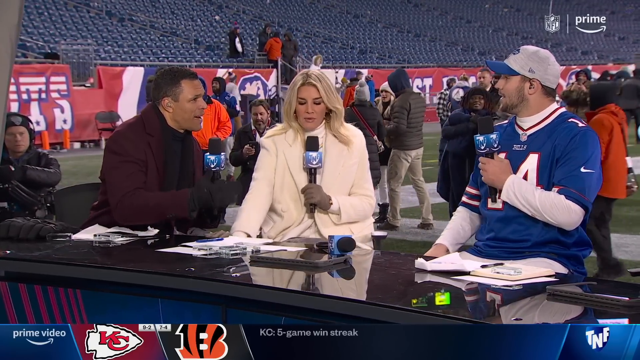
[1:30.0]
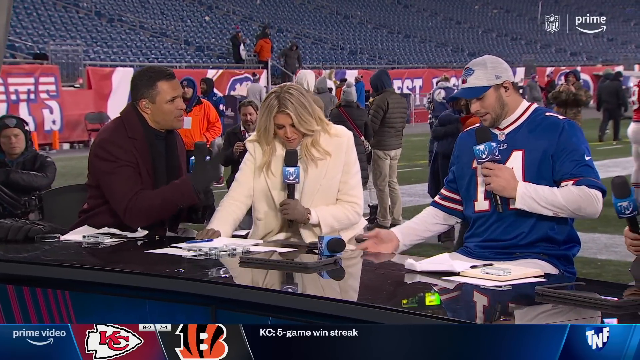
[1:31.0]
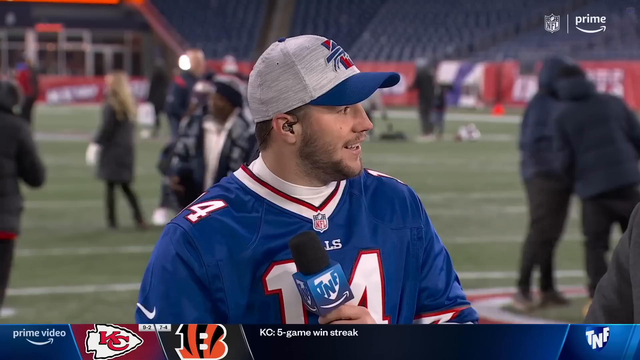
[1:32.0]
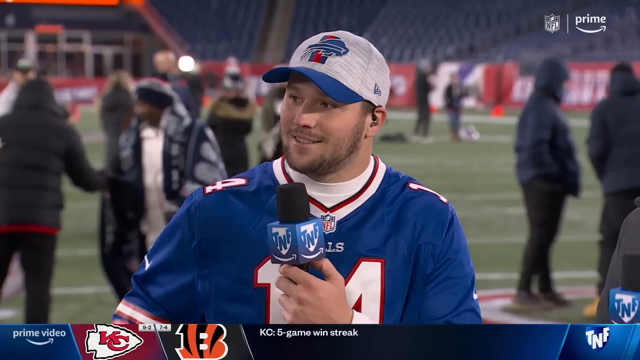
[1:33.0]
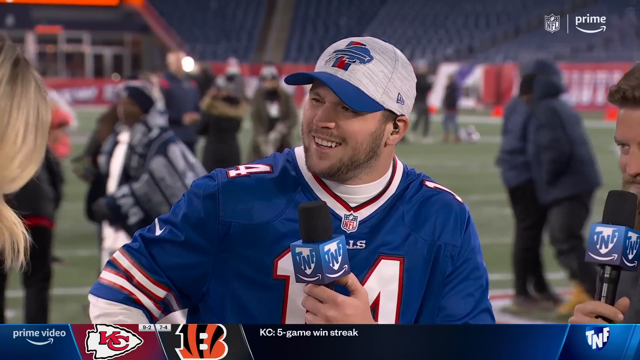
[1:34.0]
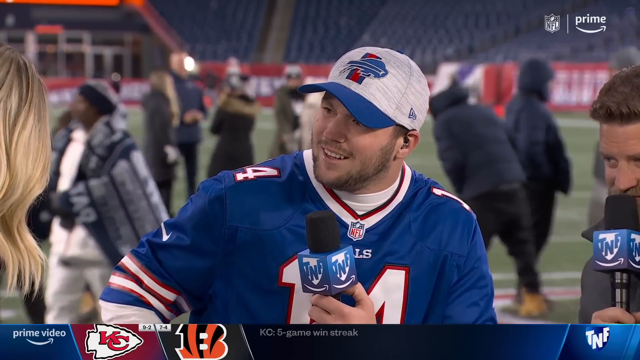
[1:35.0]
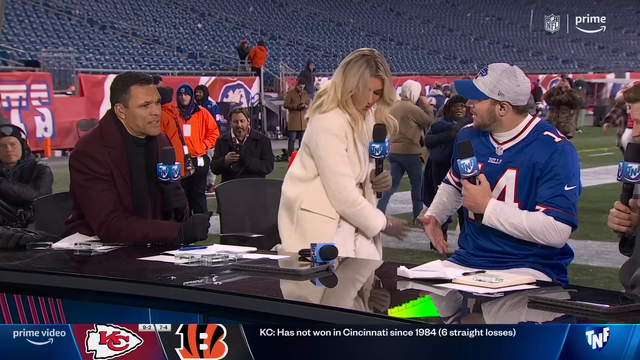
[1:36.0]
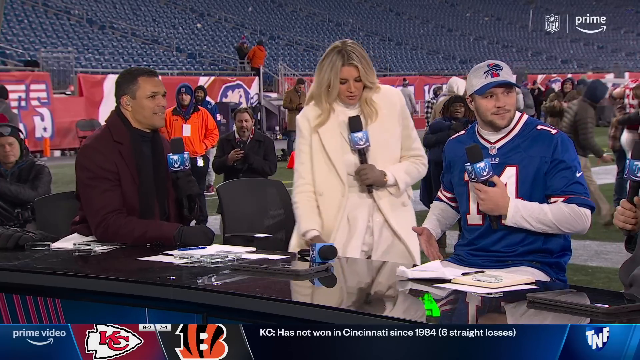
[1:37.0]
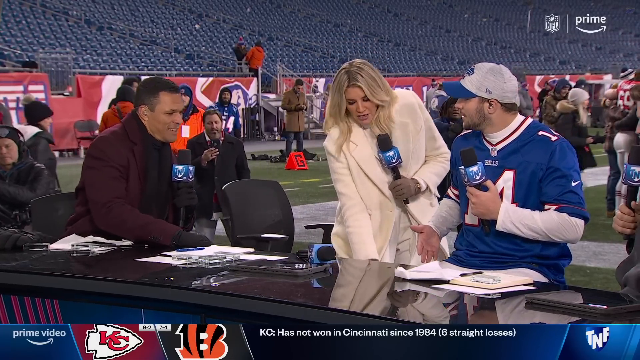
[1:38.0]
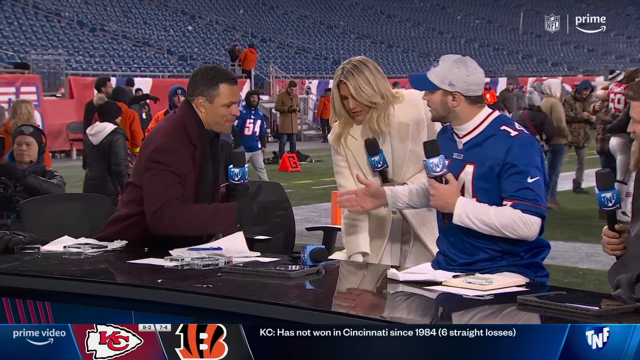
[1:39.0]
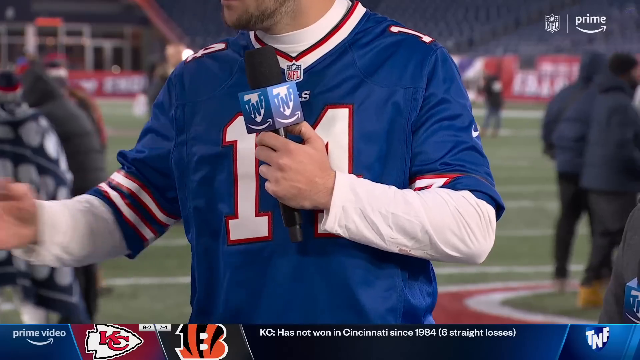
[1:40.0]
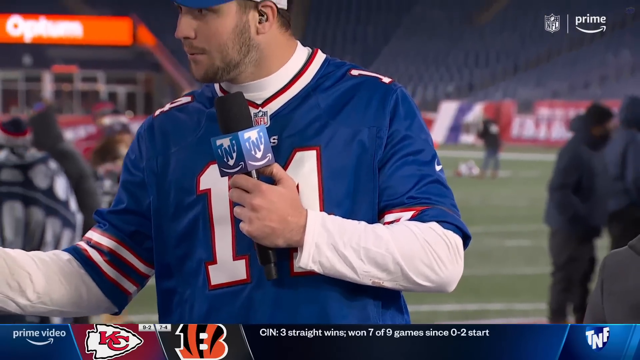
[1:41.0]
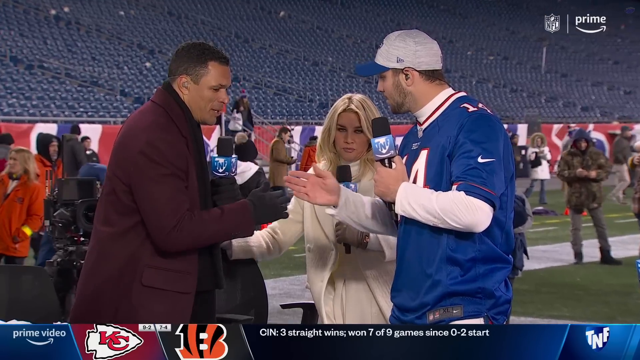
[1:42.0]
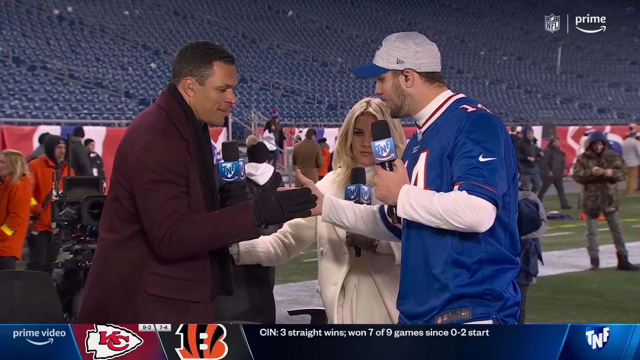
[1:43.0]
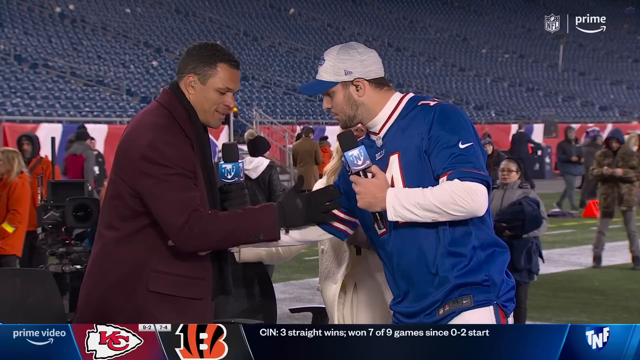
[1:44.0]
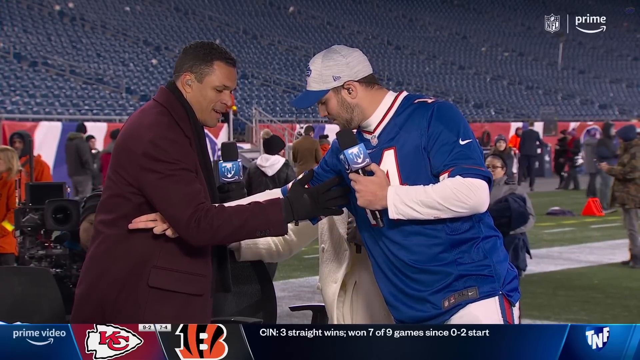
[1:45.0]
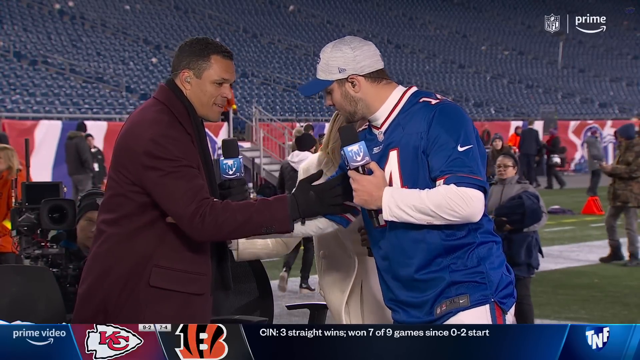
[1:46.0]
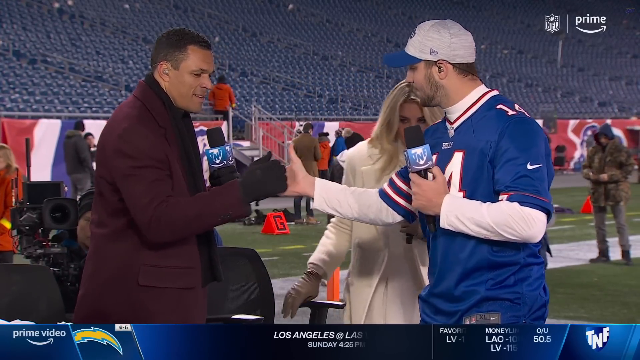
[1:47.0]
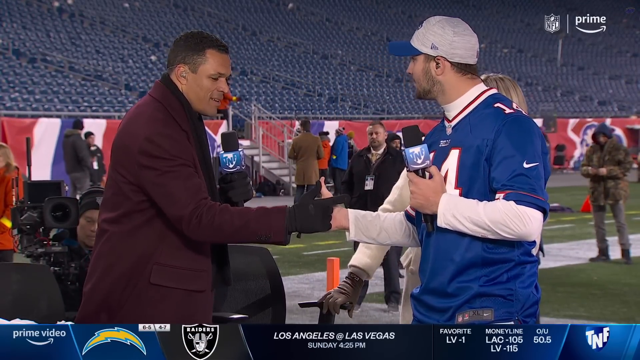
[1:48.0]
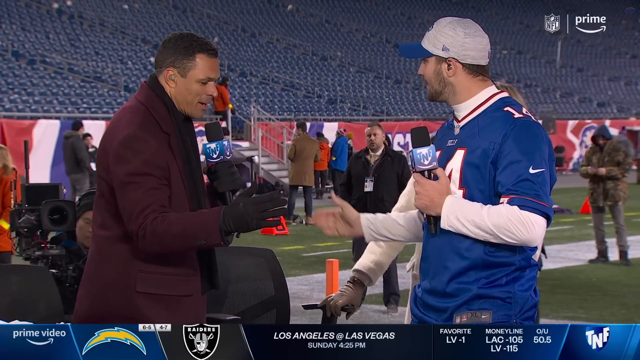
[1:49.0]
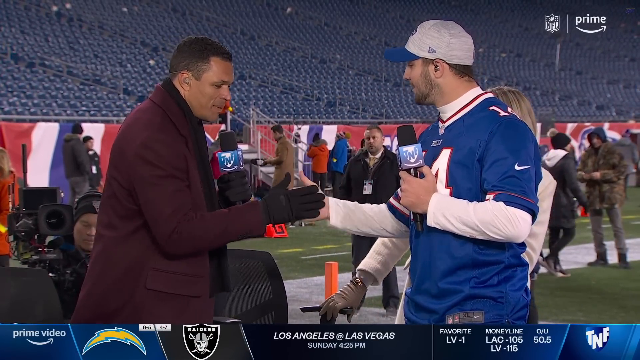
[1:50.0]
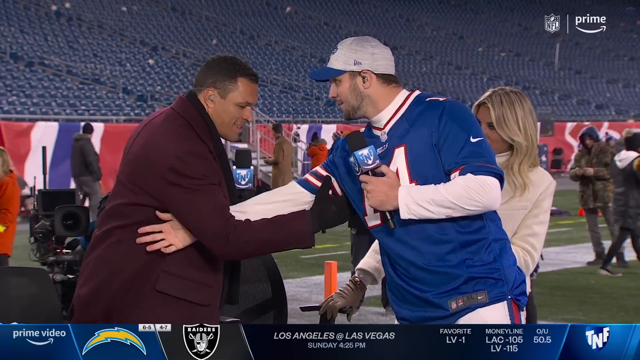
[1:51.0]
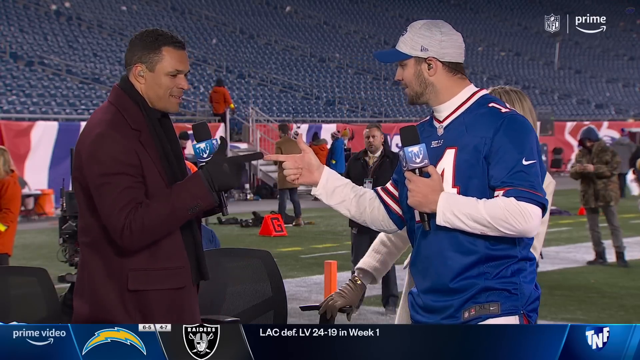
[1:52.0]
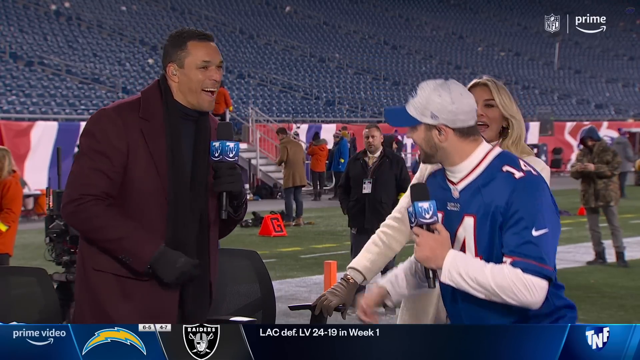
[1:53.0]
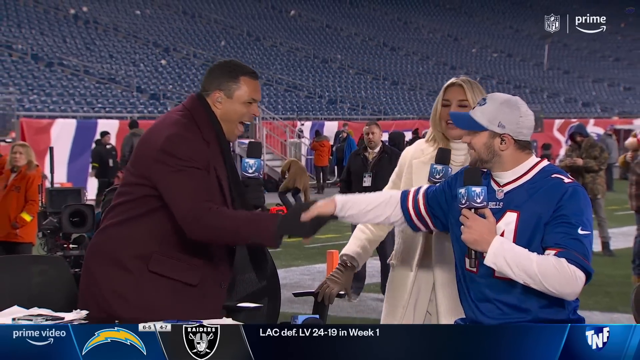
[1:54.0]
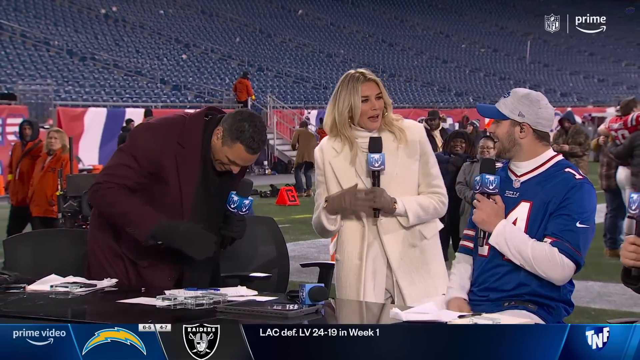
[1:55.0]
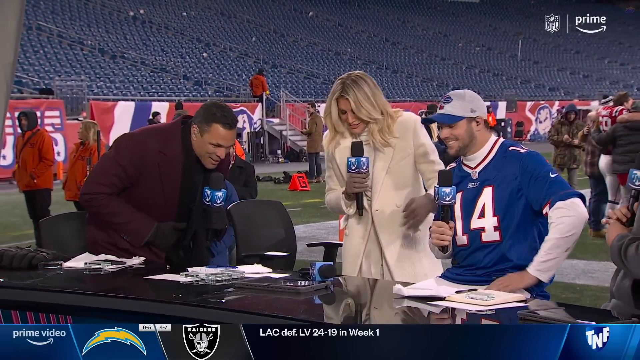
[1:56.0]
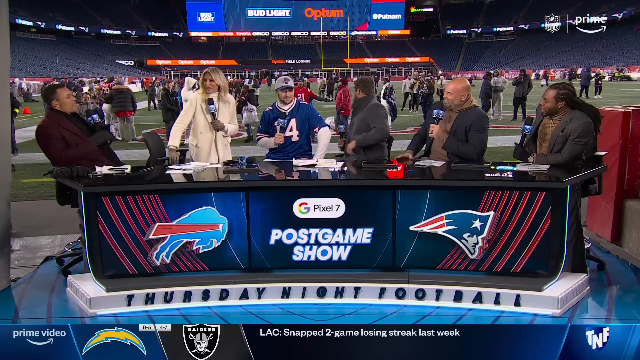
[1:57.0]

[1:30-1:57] The player in the number 14 jersey smiles and looks at the person interviewing him as he holds his microphone. He looks to the left and to the right, talking to all the interviewers. The blonde-haired woman in a beige jacket stands up, and the man next to her stands up as well. They give each other something like a secret handshake, pointing fingers at each other and giving a high five of sorts. Everyone looks excited, and the player looks extremely motivated and excited after a big win. The player and the interviewer look like they are teaching each other a handshake, or at least the player is teaching the interviewer. They shake hands, clap hands, sit down, and continue with the interview.